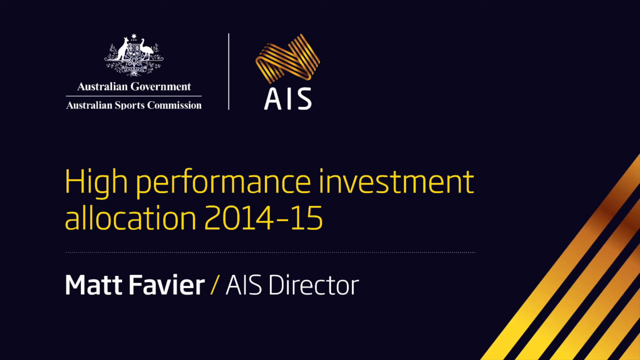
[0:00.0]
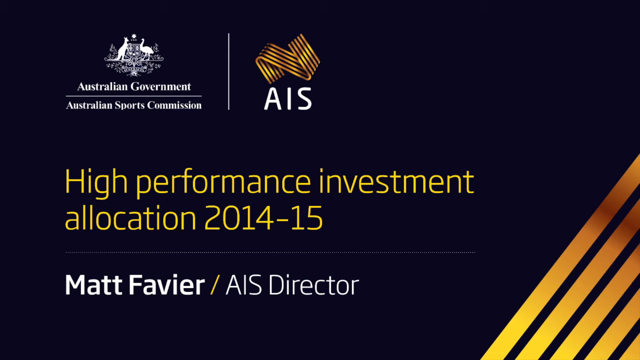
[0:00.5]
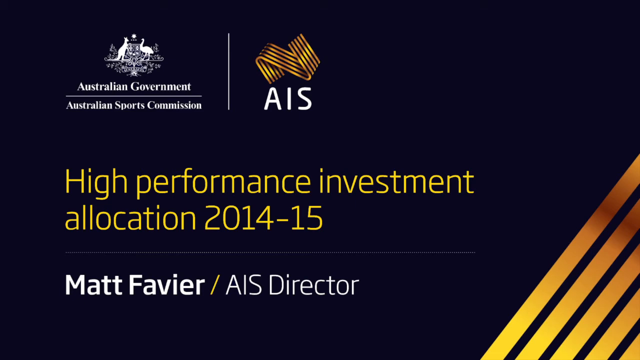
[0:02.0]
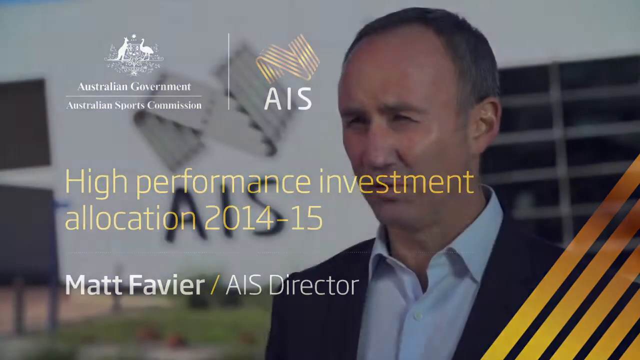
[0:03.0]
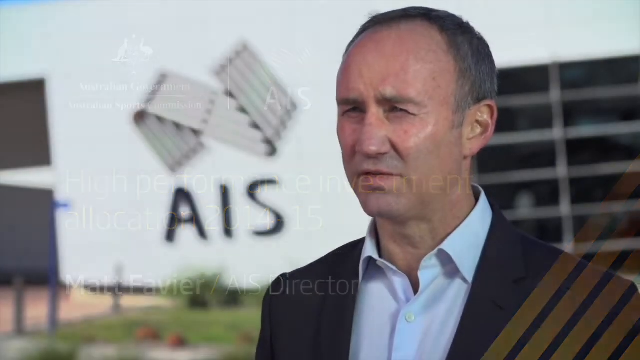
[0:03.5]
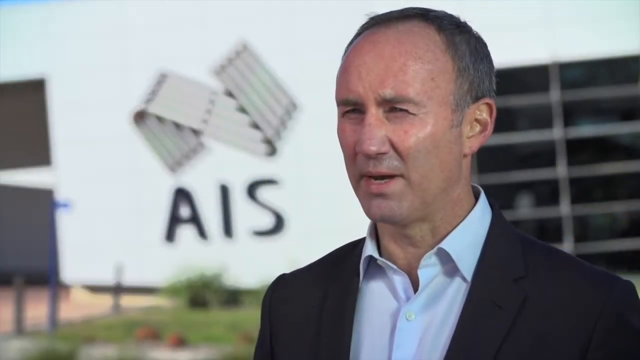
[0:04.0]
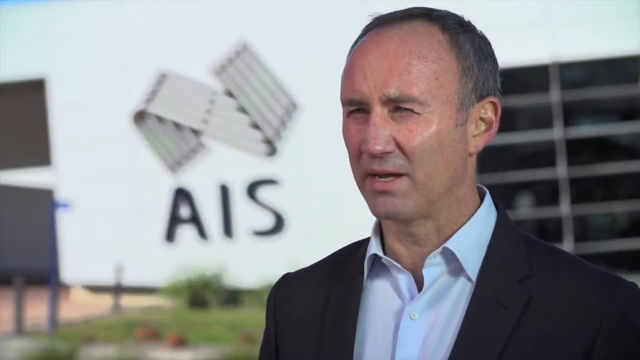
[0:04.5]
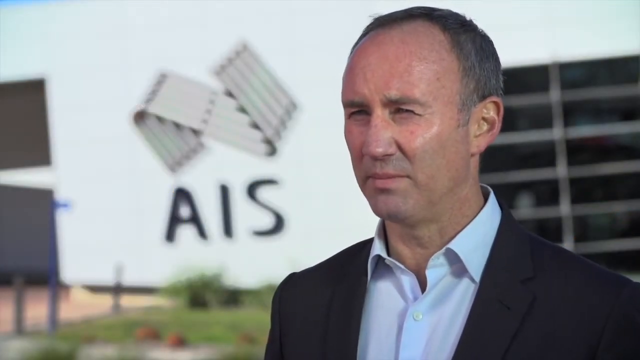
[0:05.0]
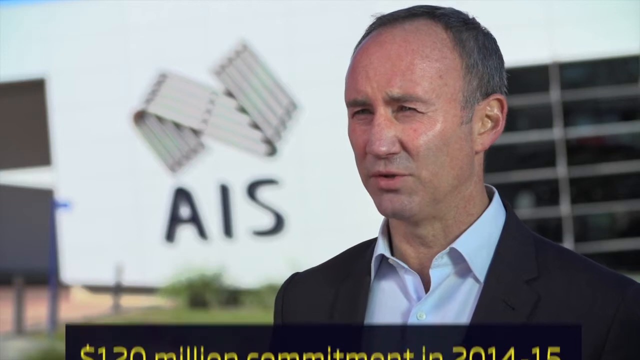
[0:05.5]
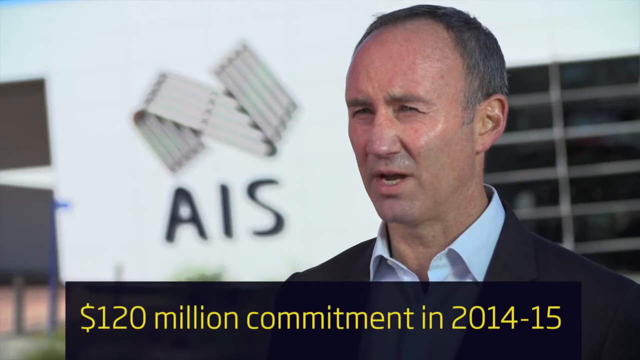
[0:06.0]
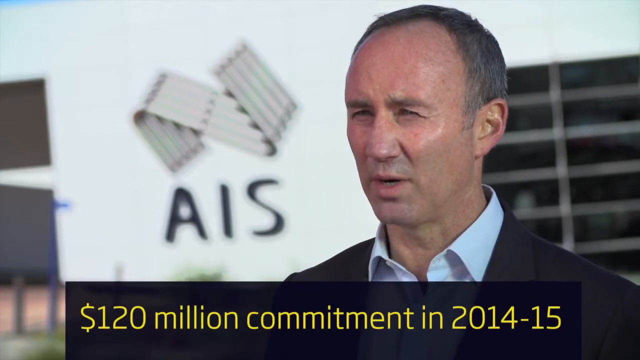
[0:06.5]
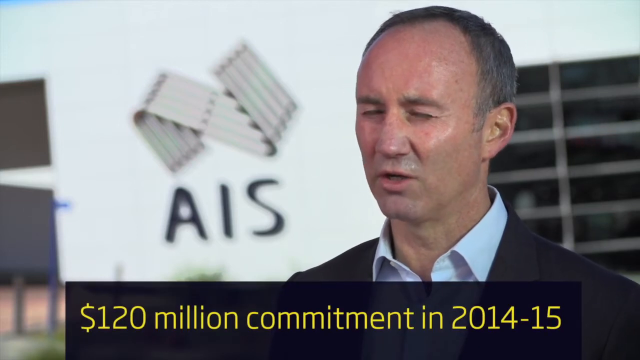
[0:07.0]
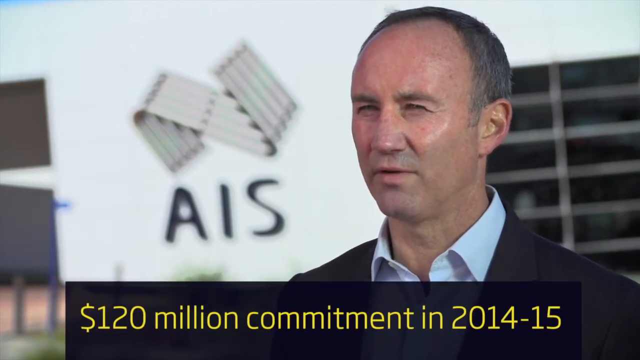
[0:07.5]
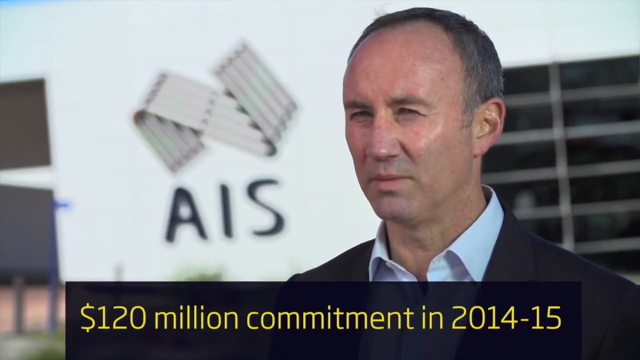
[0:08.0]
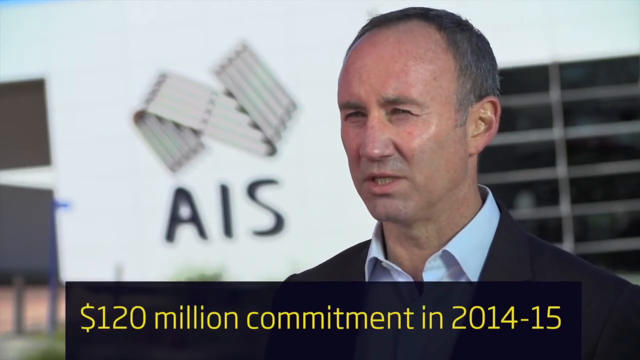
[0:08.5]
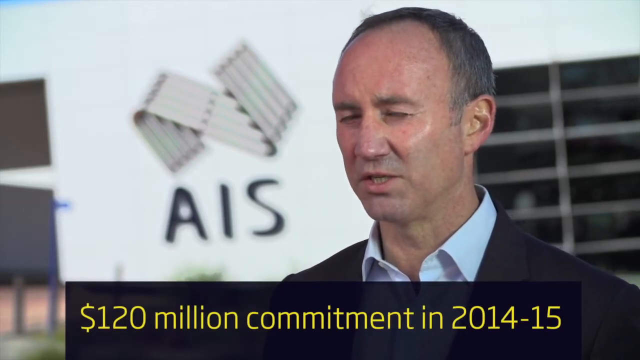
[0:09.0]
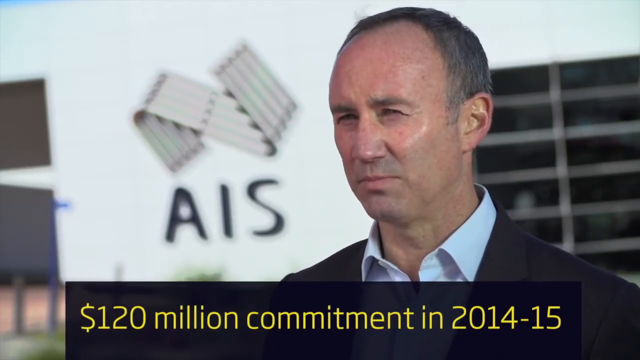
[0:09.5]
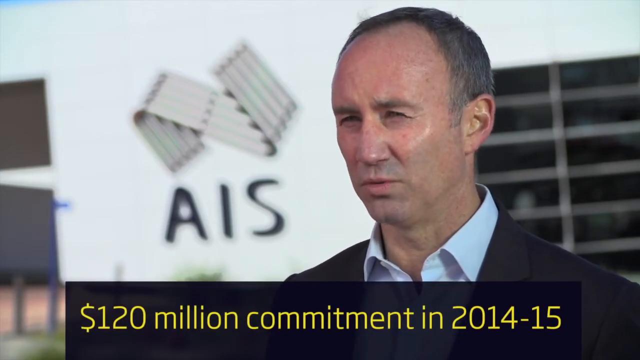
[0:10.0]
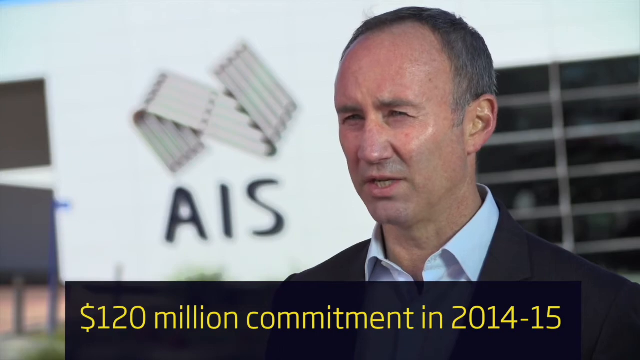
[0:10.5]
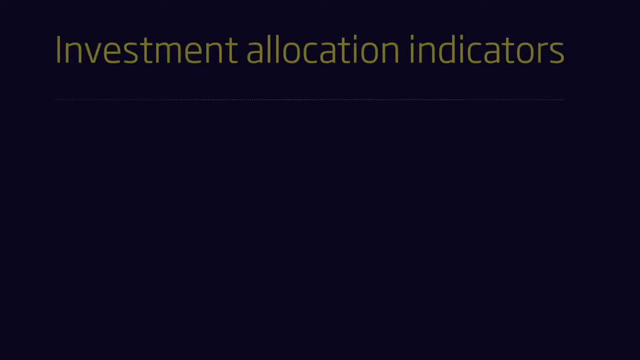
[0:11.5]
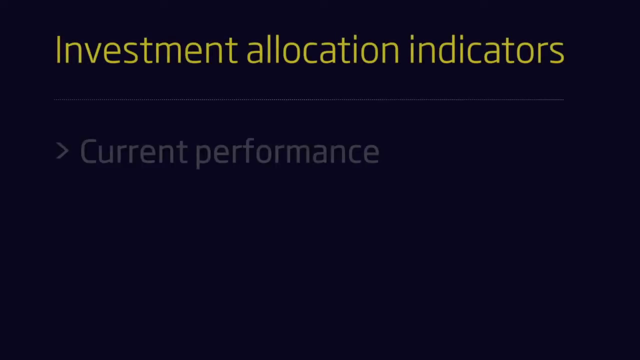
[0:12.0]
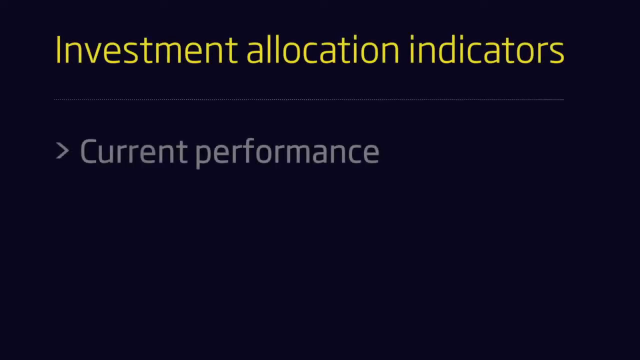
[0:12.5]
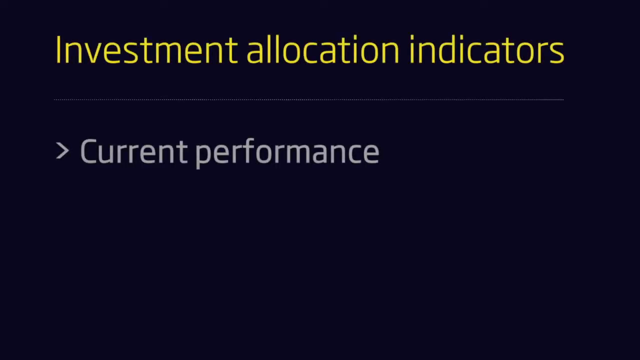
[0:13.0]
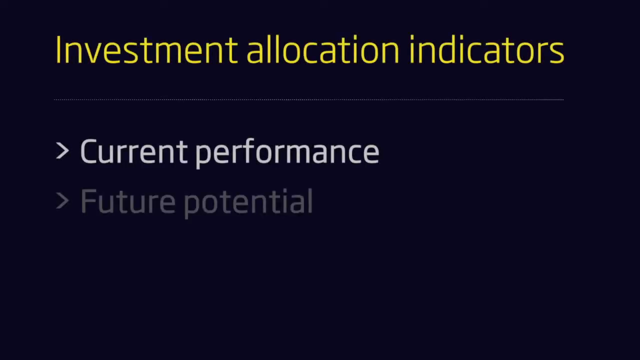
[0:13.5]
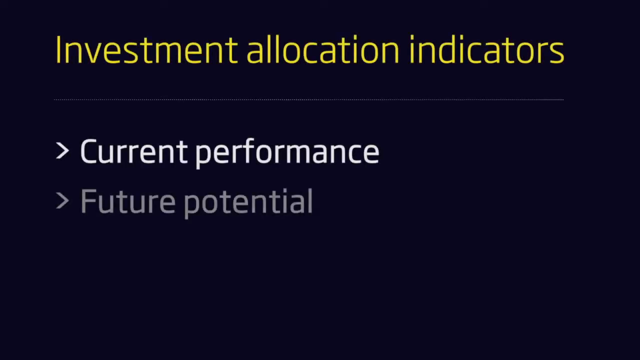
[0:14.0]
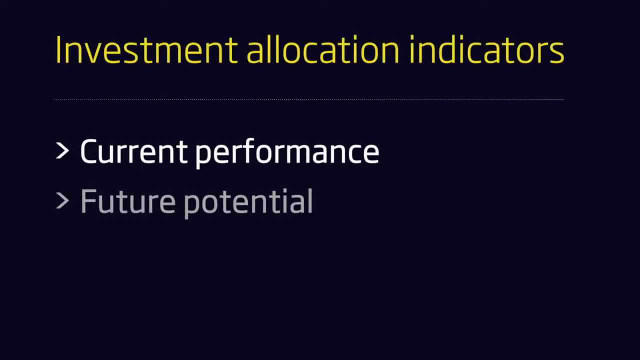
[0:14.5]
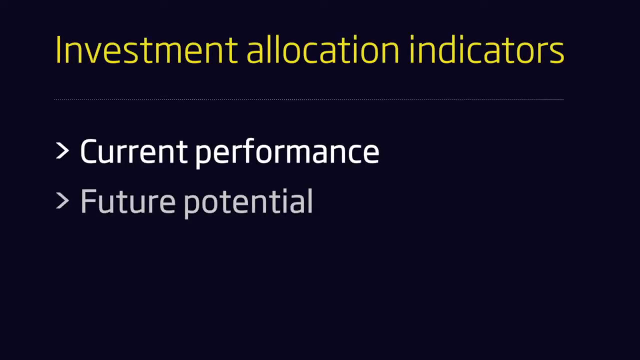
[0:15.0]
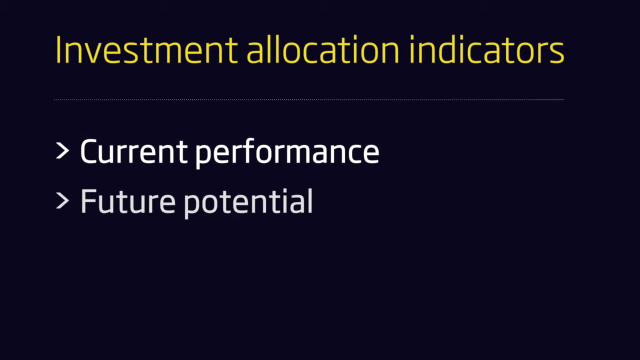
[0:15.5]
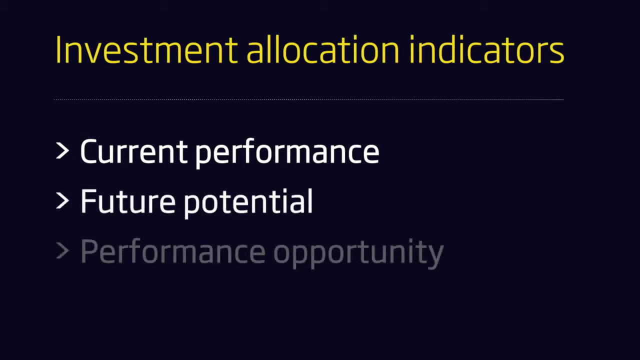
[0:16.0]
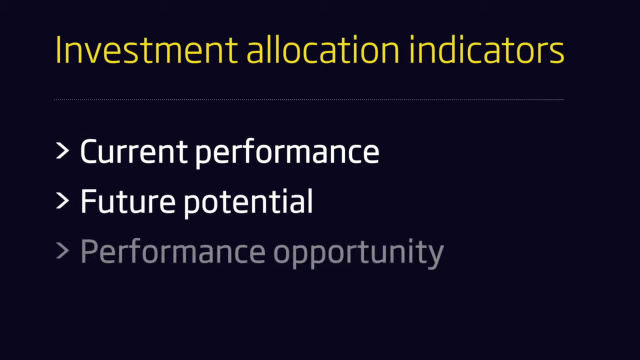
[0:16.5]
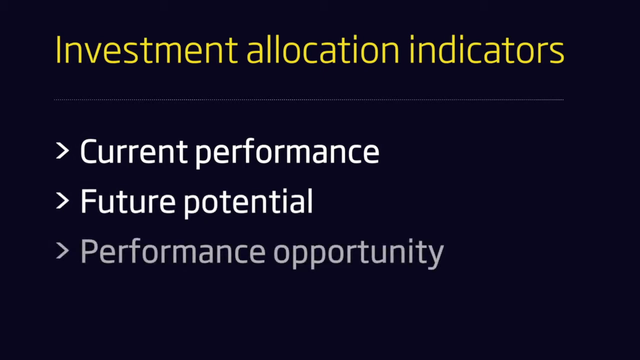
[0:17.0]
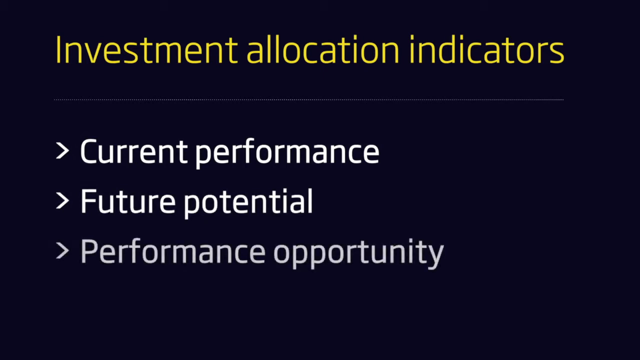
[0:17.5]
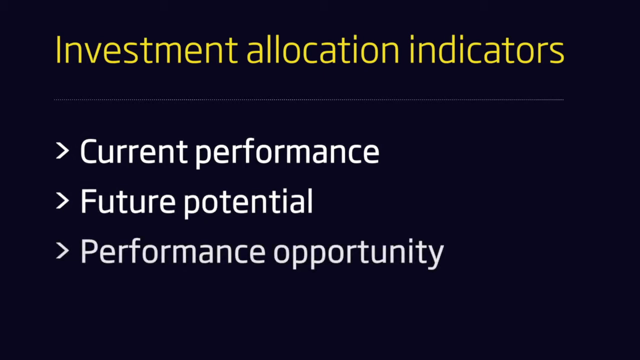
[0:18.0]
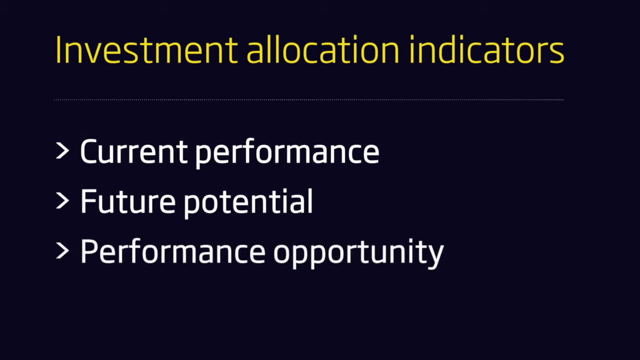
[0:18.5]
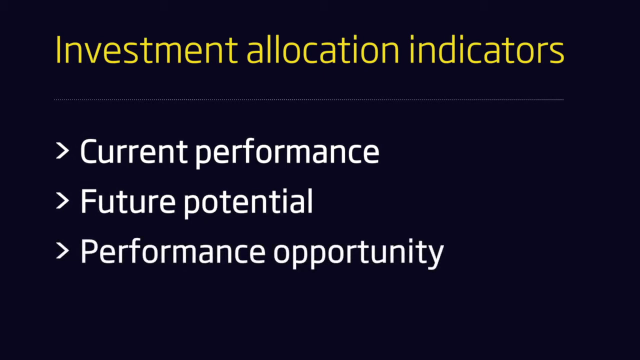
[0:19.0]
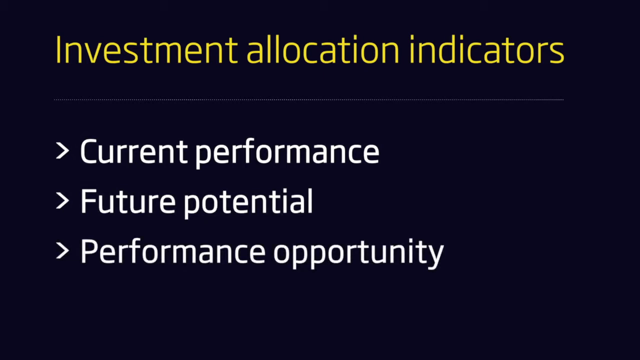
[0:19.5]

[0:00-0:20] The video is from a company called AIS, apparently an investment firm of some sort. On a black screen, three gold bars run across the screen over to the right, and text indicates AIS high-performance investment allocation for the years 2014 to 2015. Underneath is the name Matt Favier, AIS director. Over to the right, left of the AIS logo, is hard-to-read text that says Australian Government and Australian Sports Commission. The scene then changes to a gentleman being interviewed, presumably Matt Favier, the AIS director.